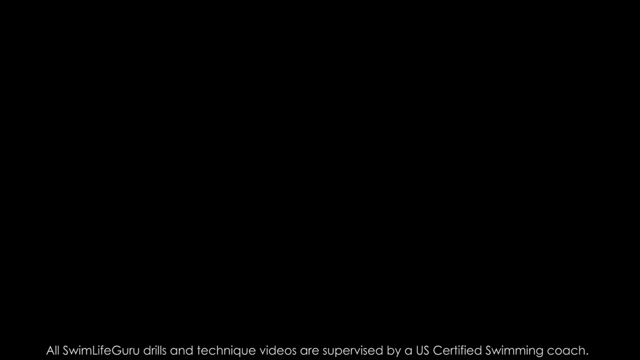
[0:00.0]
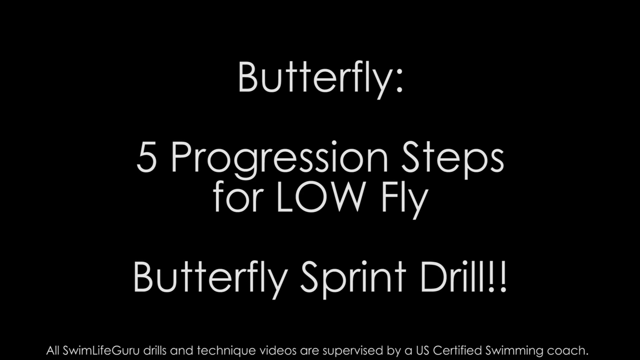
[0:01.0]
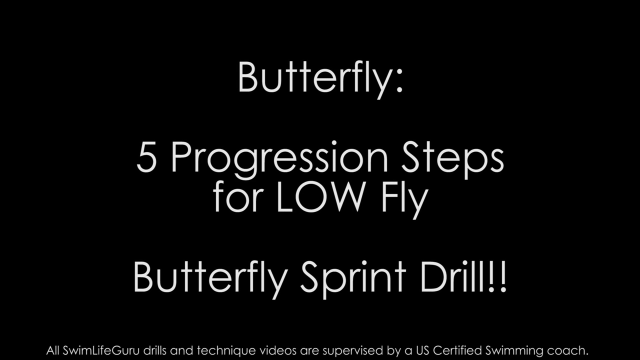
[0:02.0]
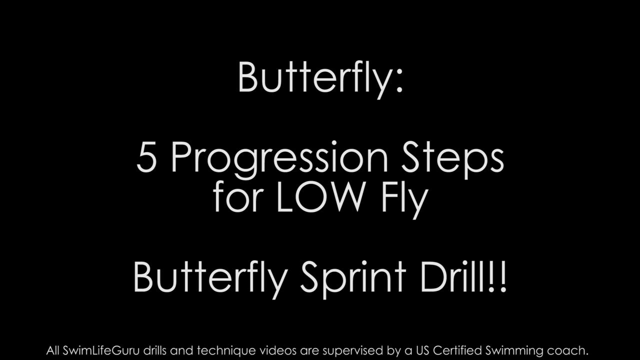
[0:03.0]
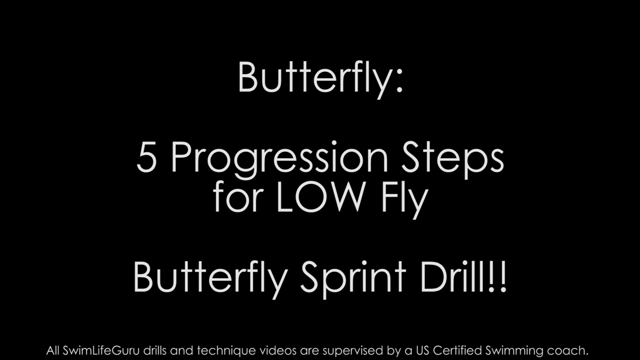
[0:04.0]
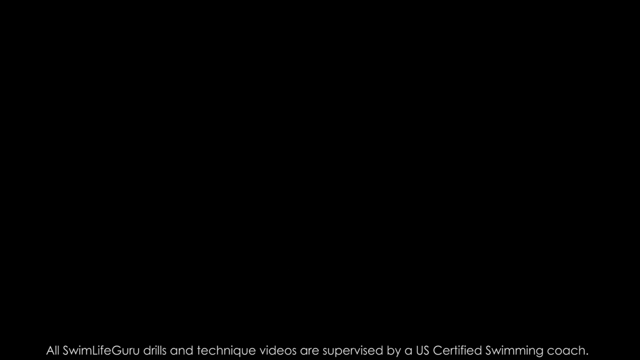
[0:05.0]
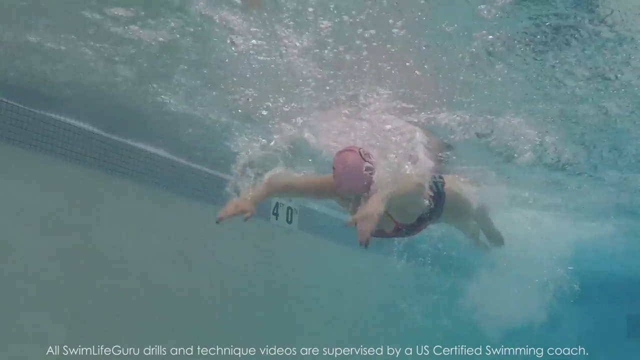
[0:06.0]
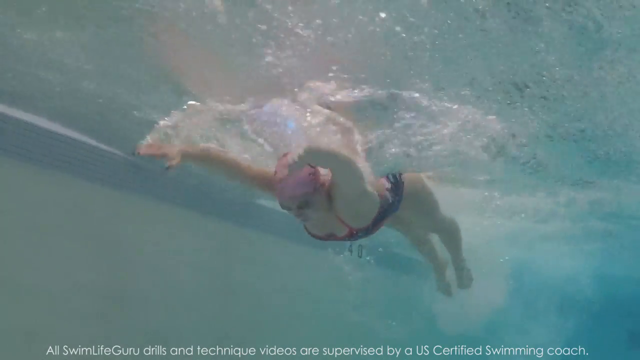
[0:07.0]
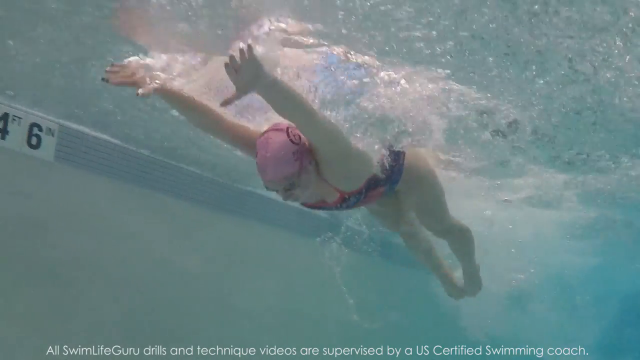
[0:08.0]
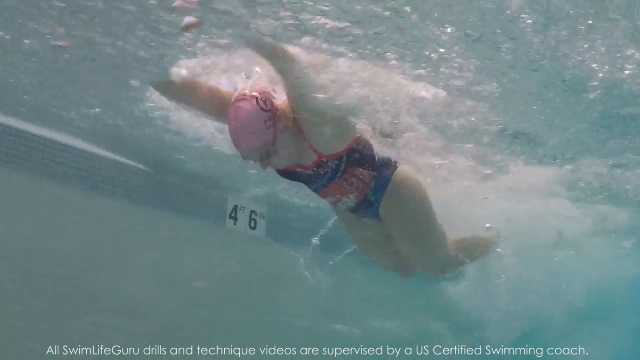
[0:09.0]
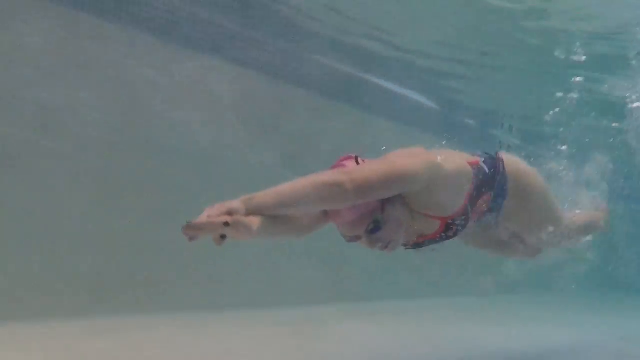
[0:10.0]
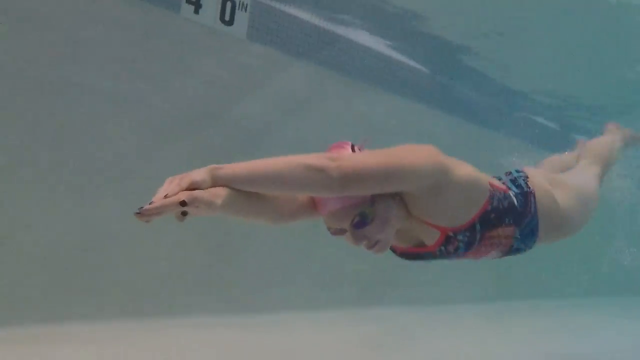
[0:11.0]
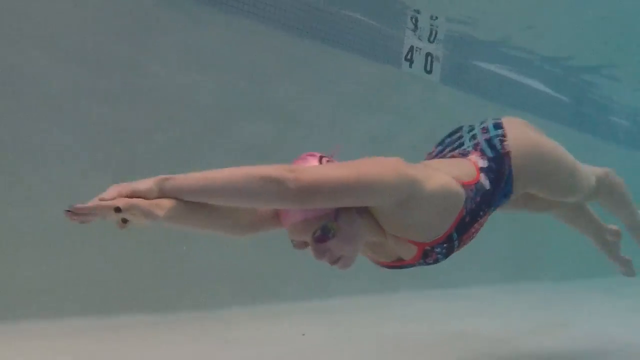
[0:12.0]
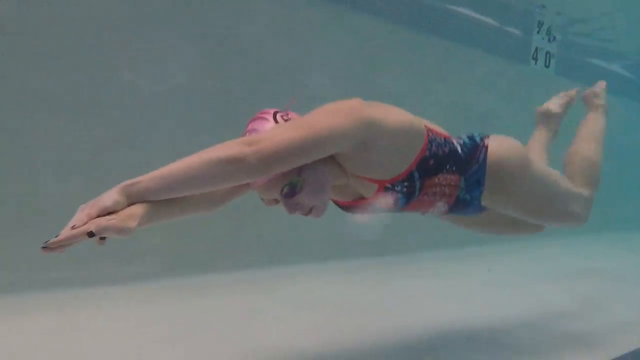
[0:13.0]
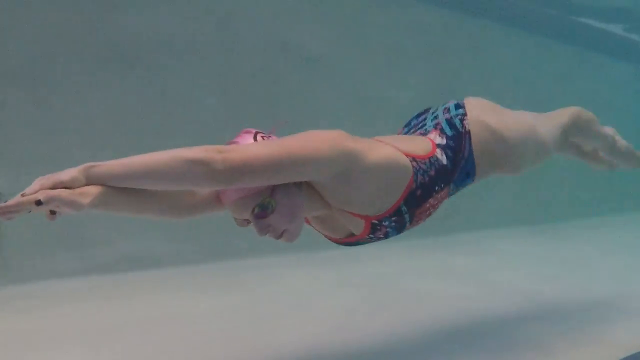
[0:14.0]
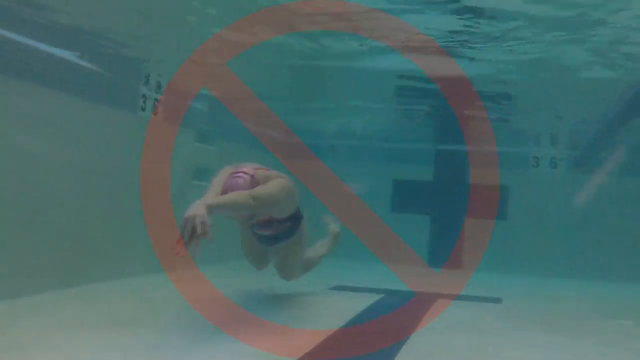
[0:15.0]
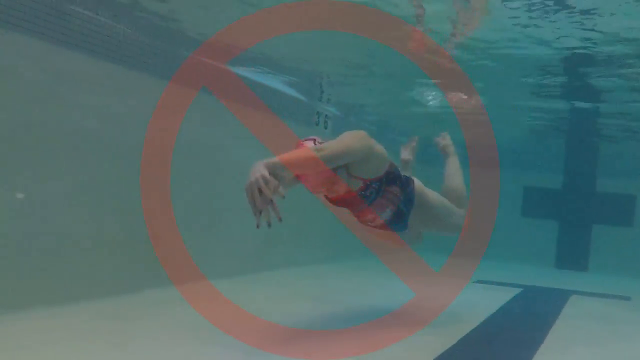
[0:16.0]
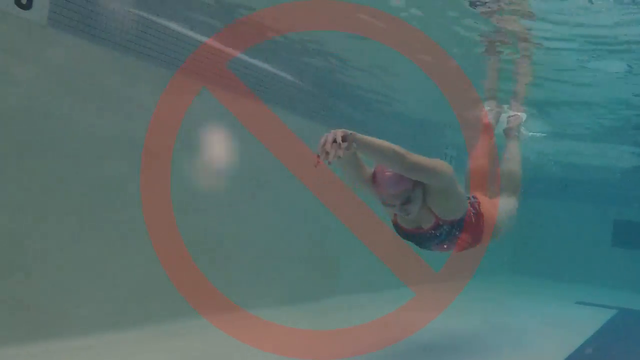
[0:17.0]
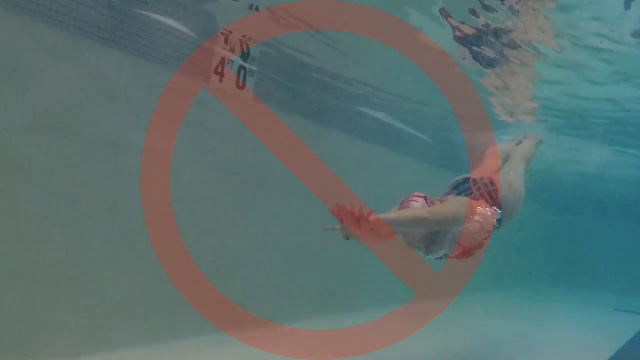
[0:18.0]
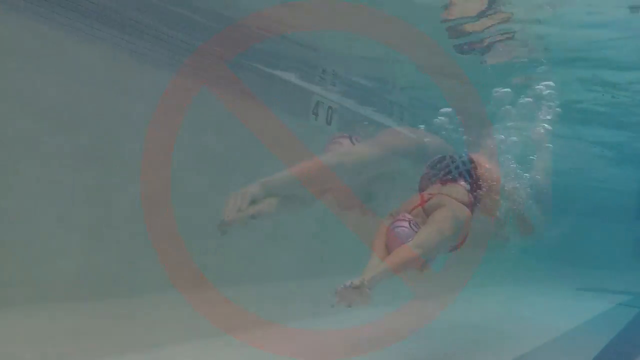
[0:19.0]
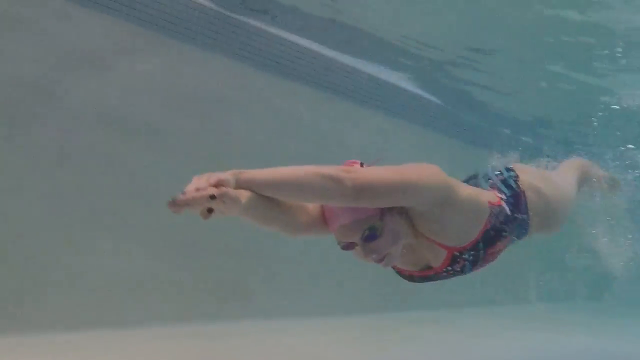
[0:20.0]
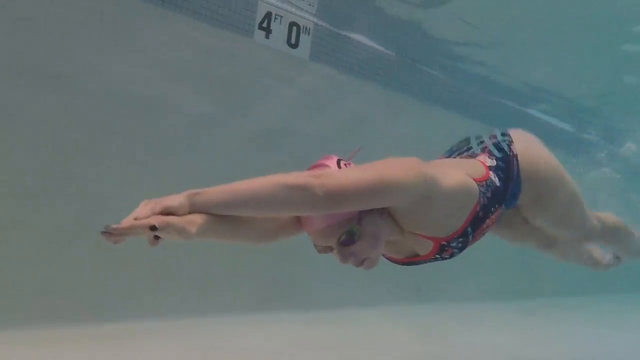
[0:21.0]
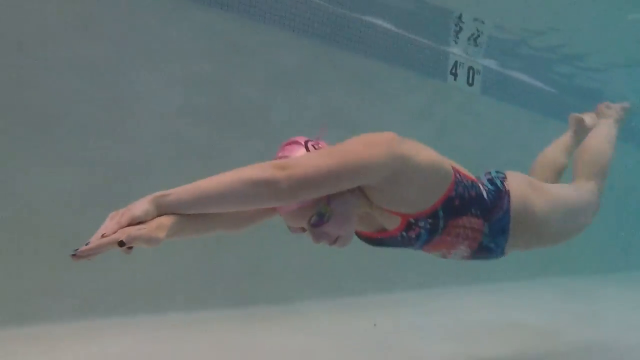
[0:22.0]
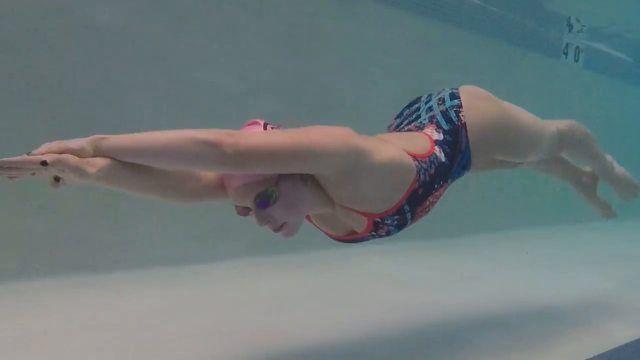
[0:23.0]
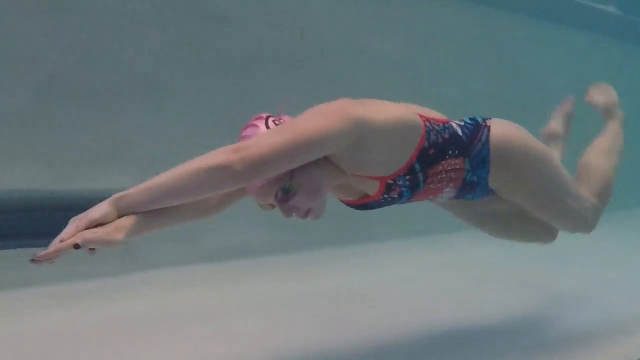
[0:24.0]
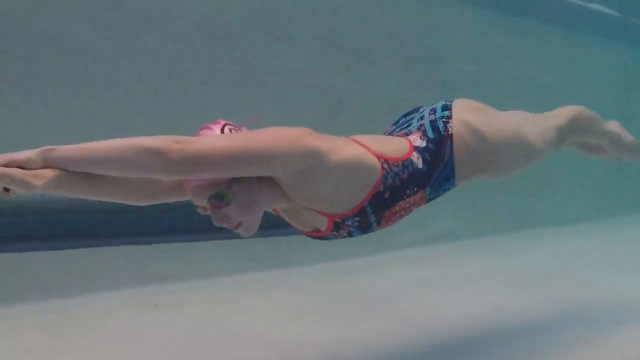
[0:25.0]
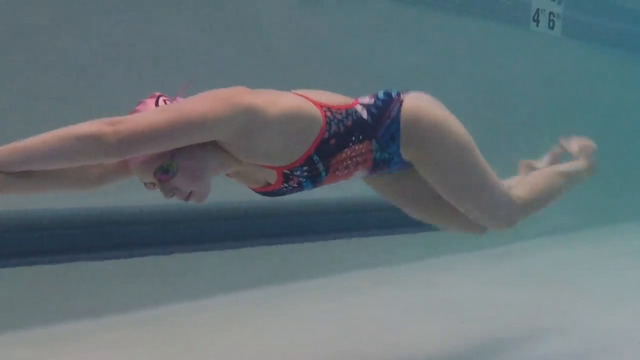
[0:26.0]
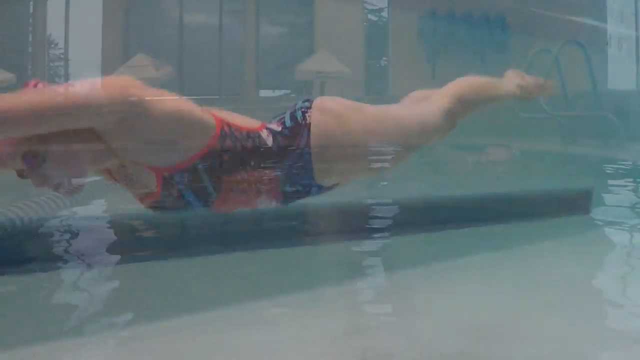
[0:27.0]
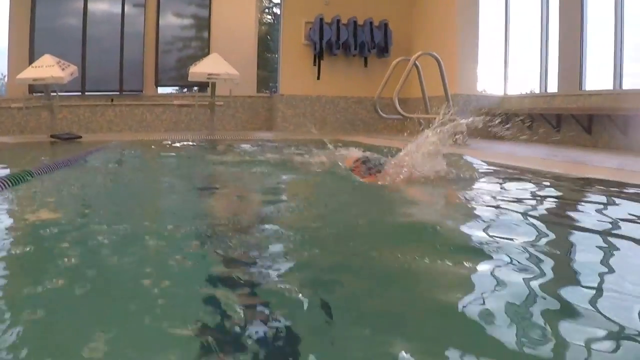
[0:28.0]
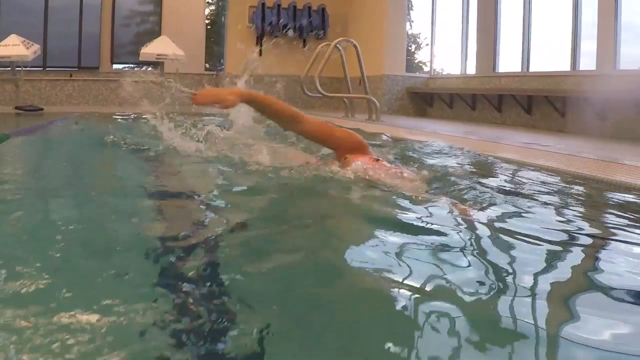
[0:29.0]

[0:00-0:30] The video opens on a black background with white letters reading "butterfly: five progression steps for low fly butterfly sprint drill". It then shows a swimmer in a pool wearing what looks like a pink swim cap and a regular women's maillot bathing suit. The video shows what to do and what not to do. After she has jumped into the pool, she does a sort of wormy movement through the water before coming up to take a breath. When she shows what not to do, a big circle with a red slash through it appears; done wrong, she makes the movement all too big. Done right, she has her hands crossed, the left on top of the right, and she moves only her back and her legs. The video then shows her swimming freestyle.